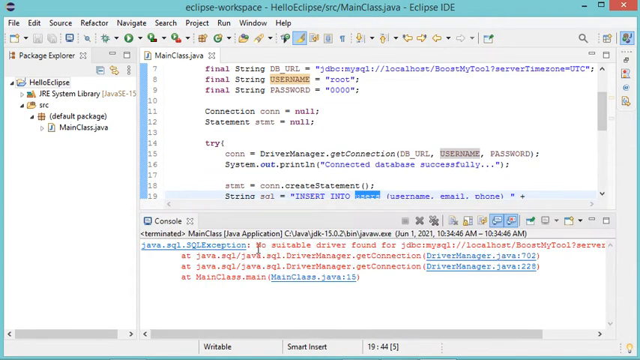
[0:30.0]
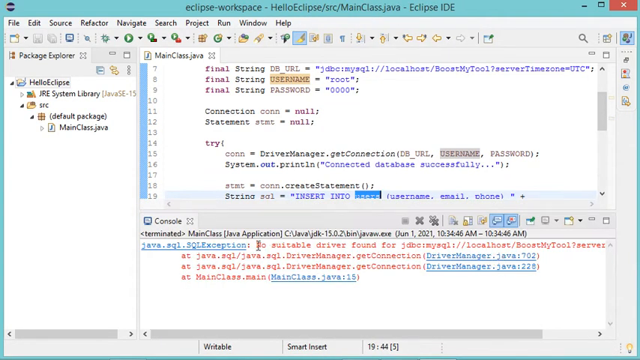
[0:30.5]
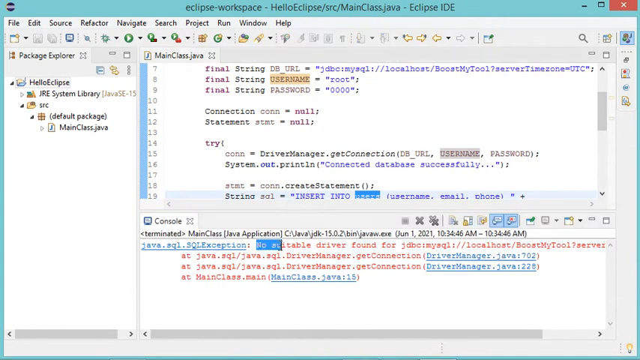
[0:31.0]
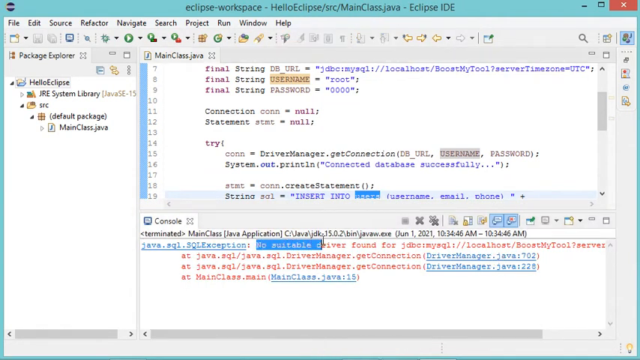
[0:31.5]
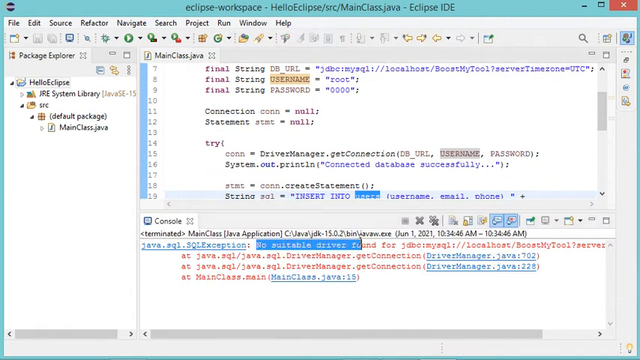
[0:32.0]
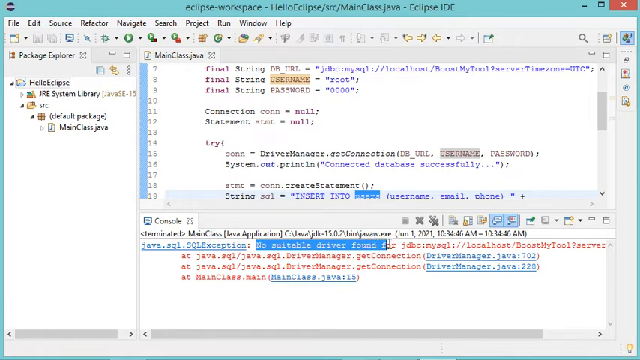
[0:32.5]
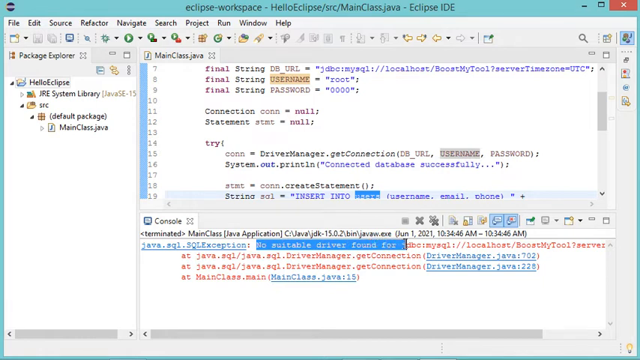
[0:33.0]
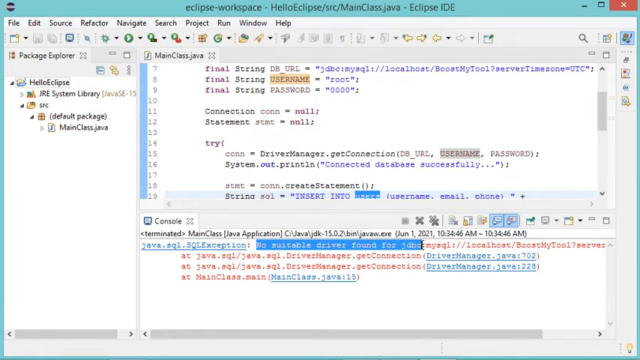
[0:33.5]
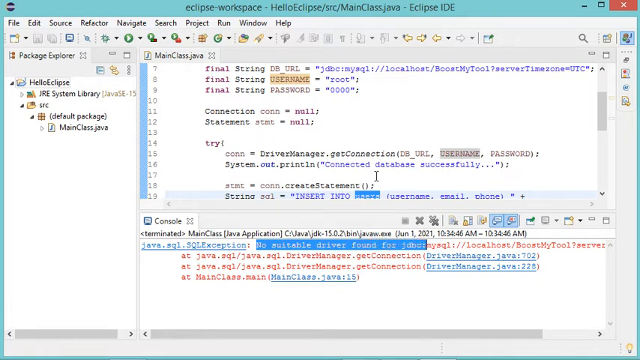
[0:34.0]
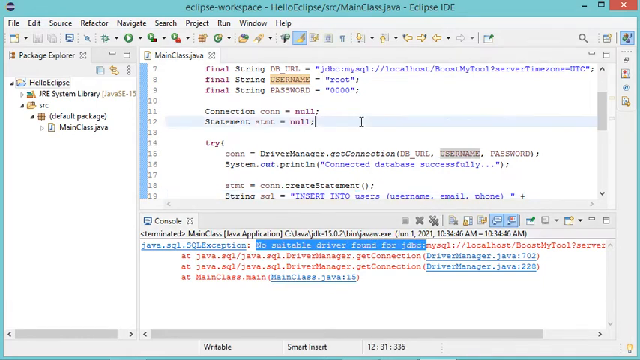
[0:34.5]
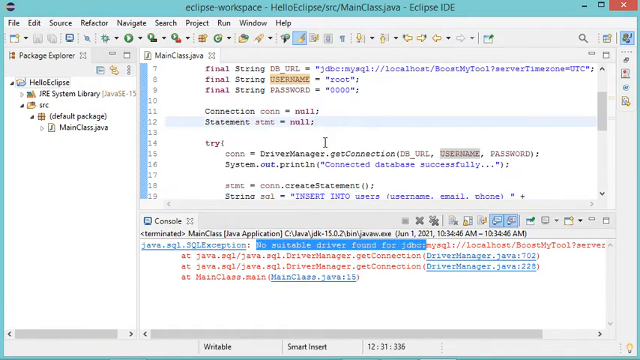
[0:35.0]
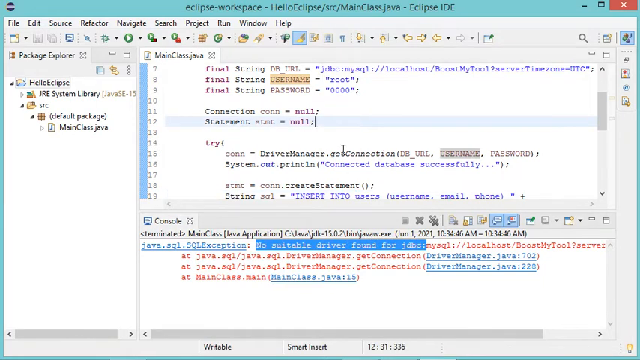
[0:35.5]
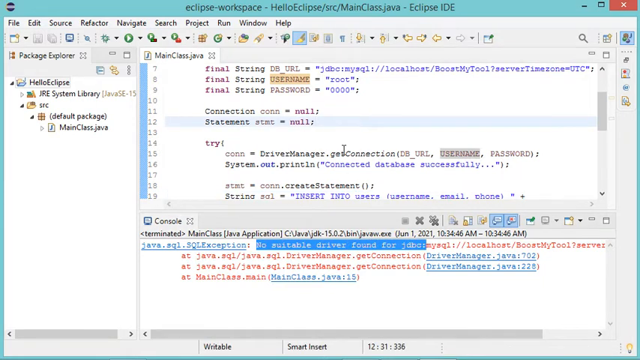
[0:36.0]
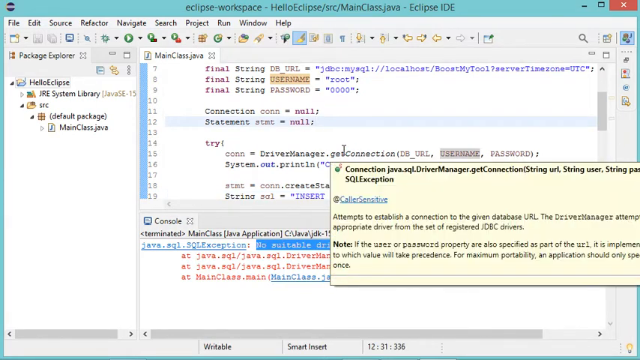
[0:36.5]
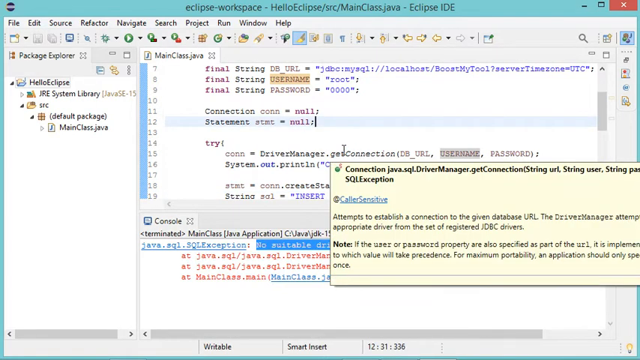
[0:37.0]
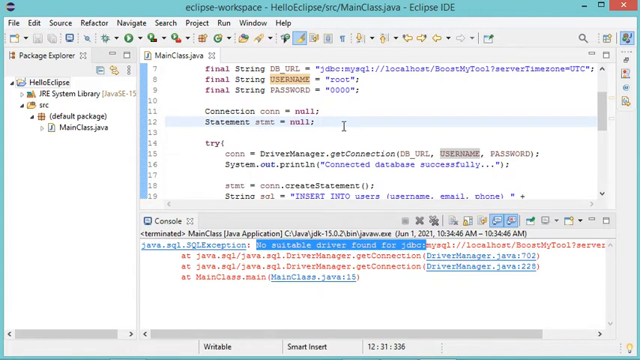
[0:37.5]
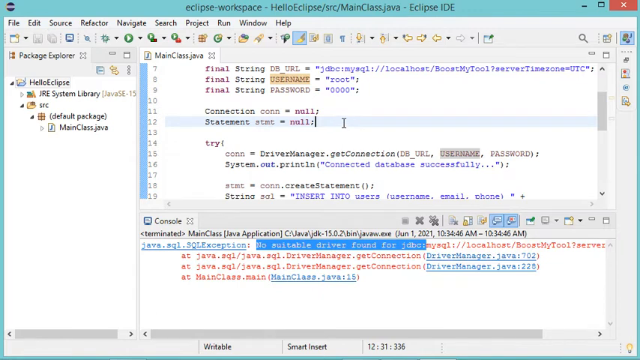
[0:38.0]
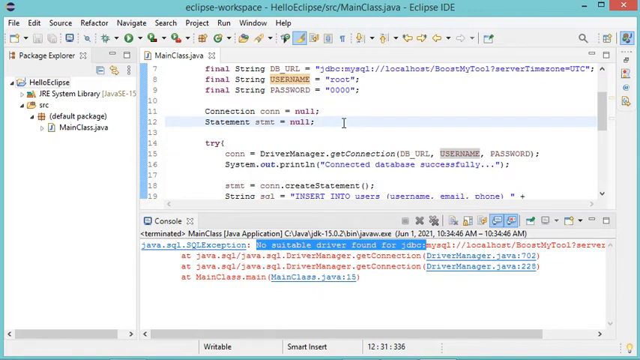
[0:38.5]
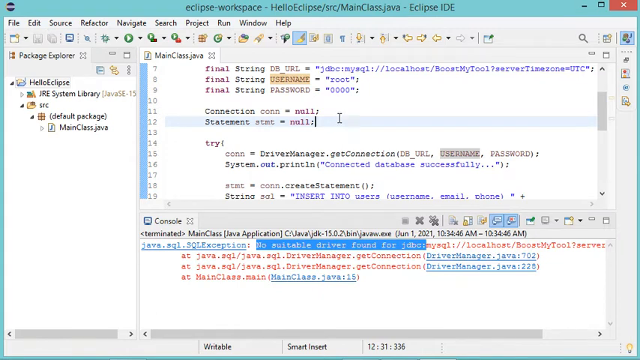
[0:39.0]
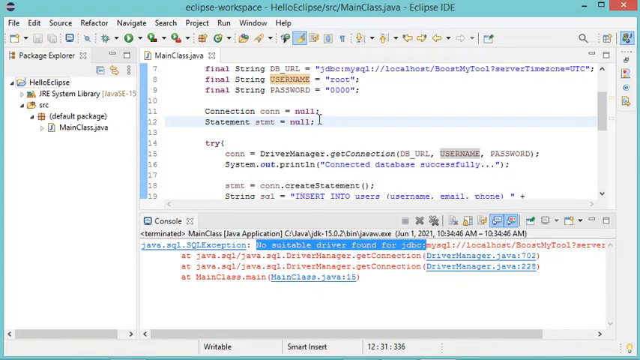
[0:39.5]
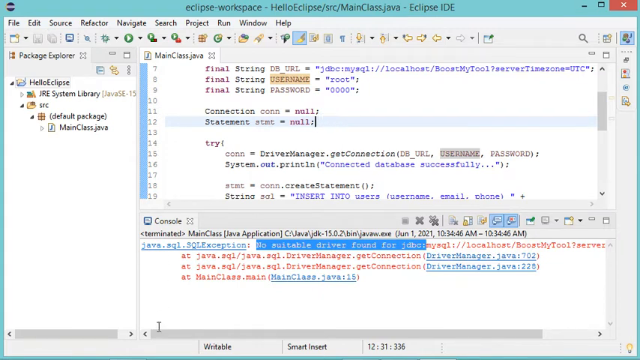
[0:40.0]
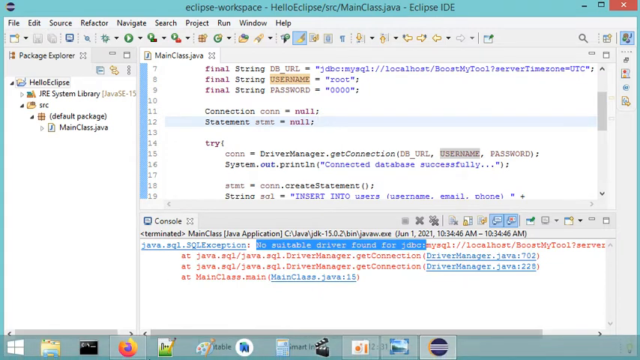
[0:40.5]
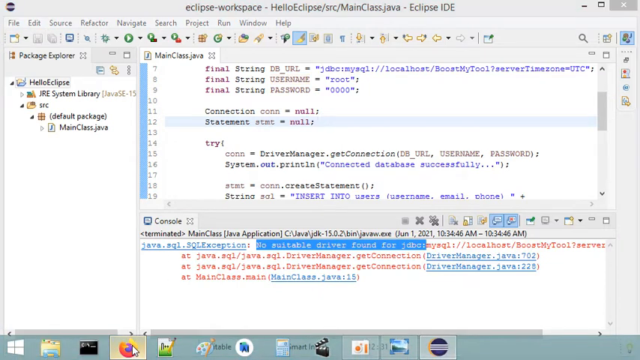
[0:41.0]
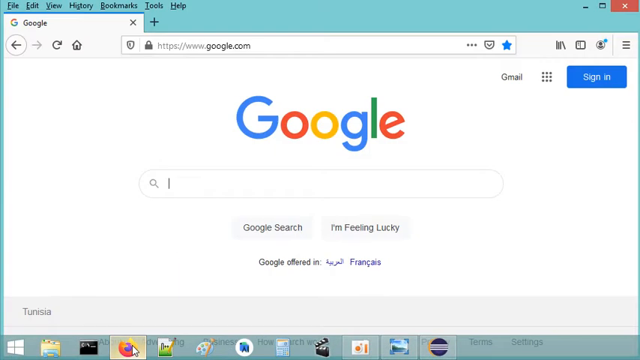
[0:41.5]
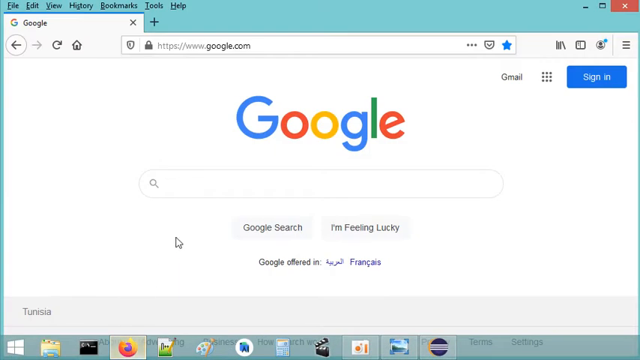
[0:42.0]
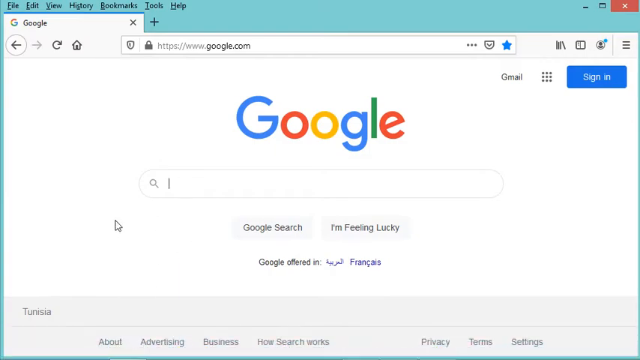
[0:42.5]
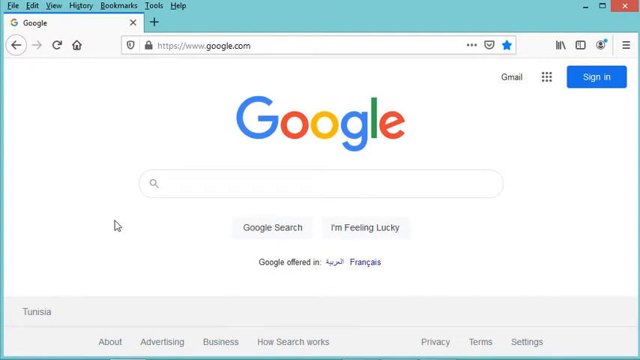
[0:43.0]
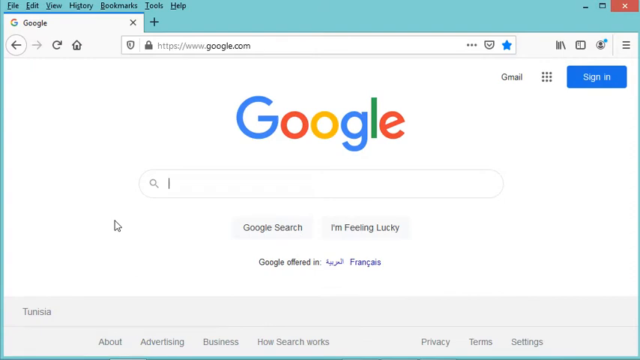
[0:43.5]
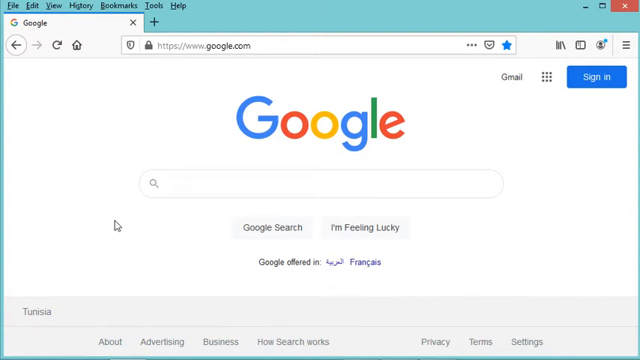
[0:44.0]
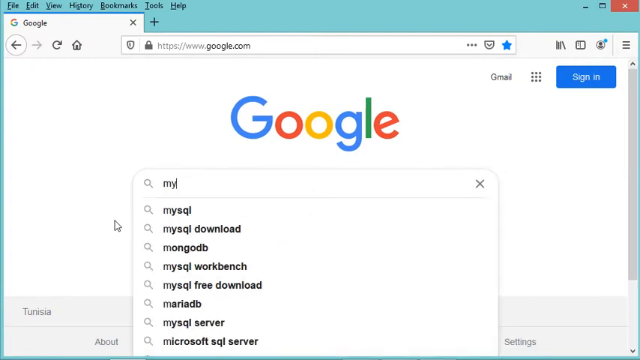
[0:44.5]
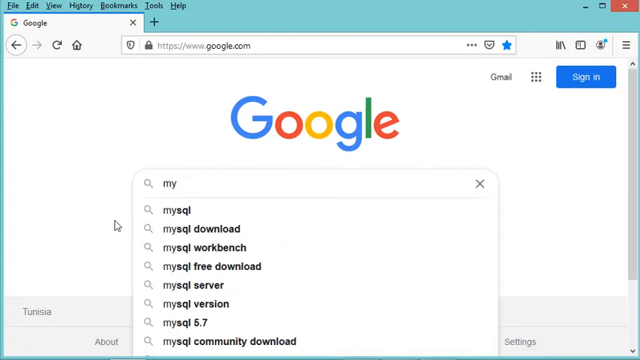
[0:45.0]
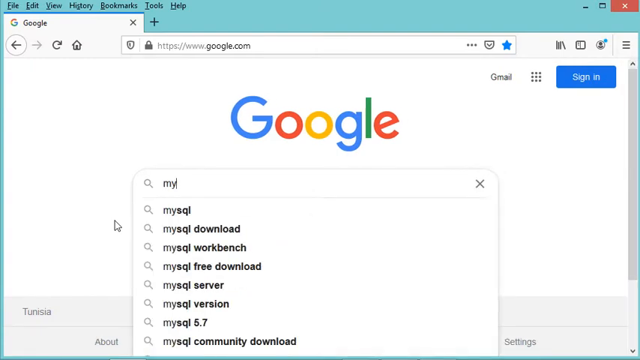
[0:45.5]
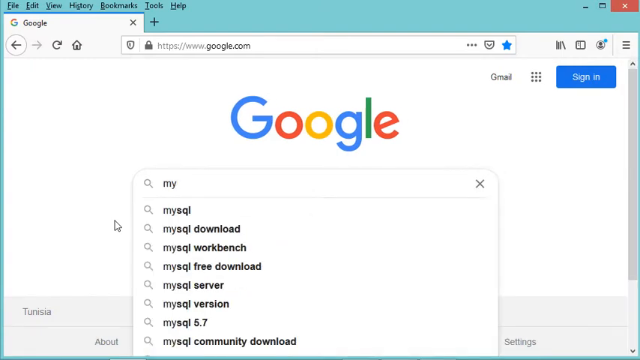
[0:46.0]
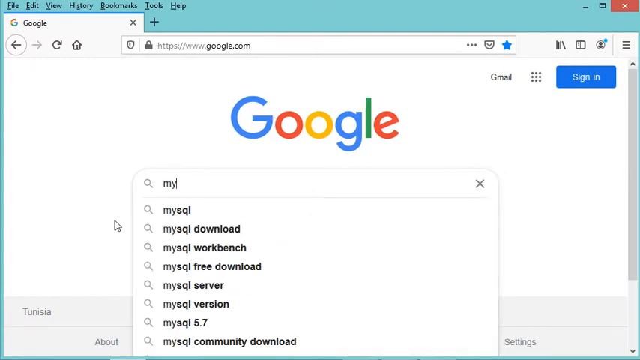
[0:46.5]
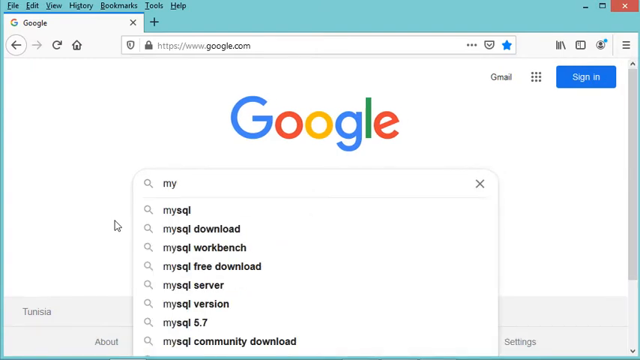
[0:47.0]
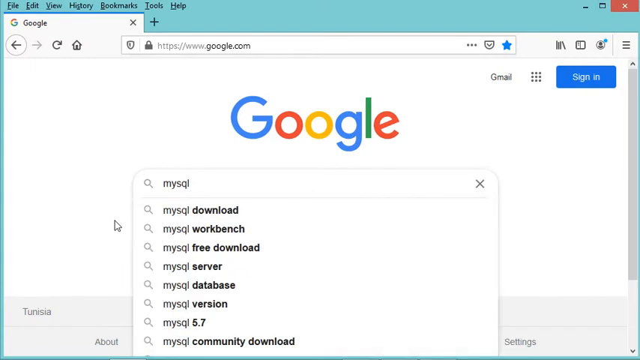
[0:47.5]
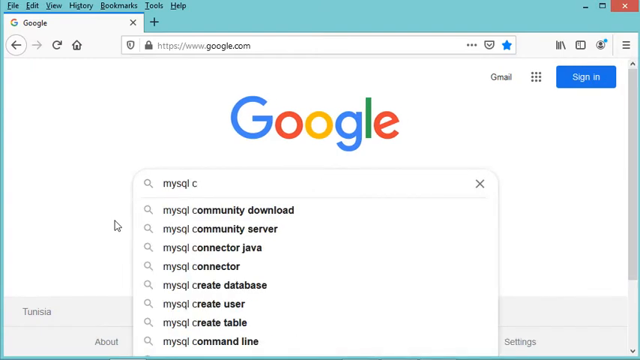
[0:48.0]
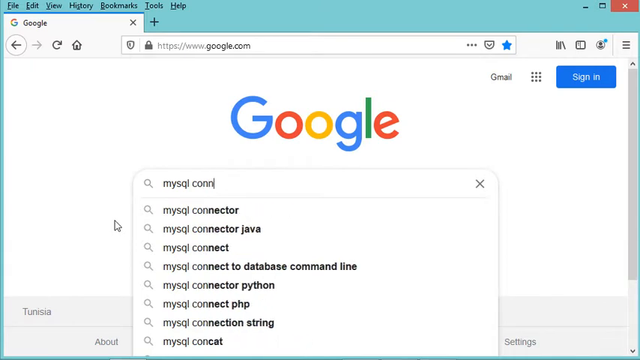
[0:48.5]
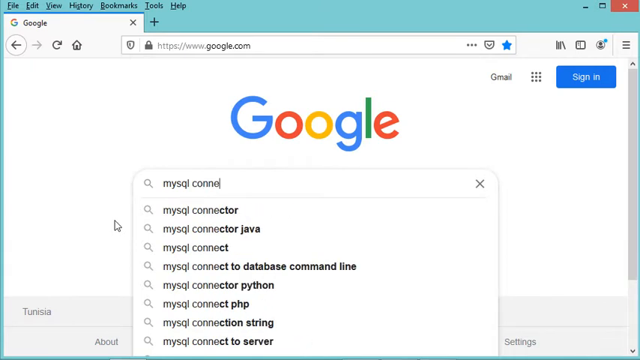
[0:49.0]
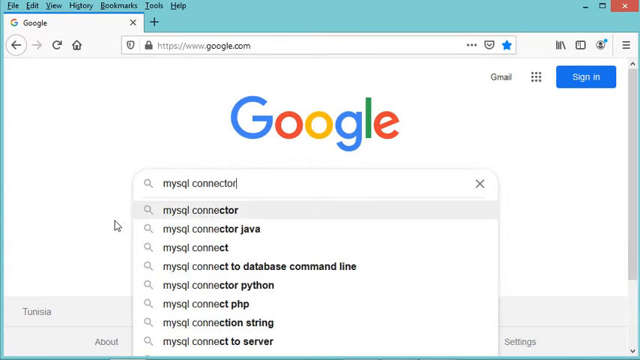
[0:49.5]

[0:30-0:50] An Eclipse workspace shows "helloeclipse", "src" and "mainclass.java". In the main area of the interface there is text reading "mainclass.java", and a console with some text is visible. A package explorer on the left lists helloeclipse, jre, system library, src, default package and mainclass.java, and a row of menu options across the top includes file, edit, source, refactor, navigate, search, project, run, window and help. The user highlights "no suitable driver found for JDBC", then clicks in an area that says "null". A yellow banner appears with text beginning "connection java.sql.drivermanager.get connection, string URL, string user, string pass SQL exception" and including "attempts to establish a connection to the given database URL." The user kind of hovers over the null area, then goes to the Google search engine and begins typing "my SQL connector".